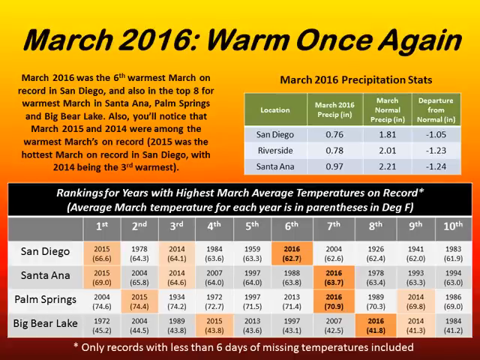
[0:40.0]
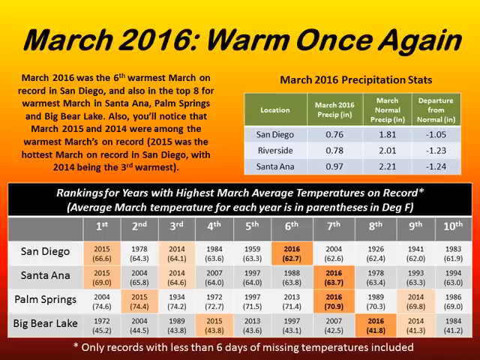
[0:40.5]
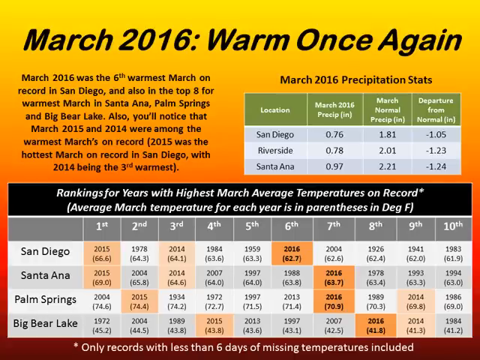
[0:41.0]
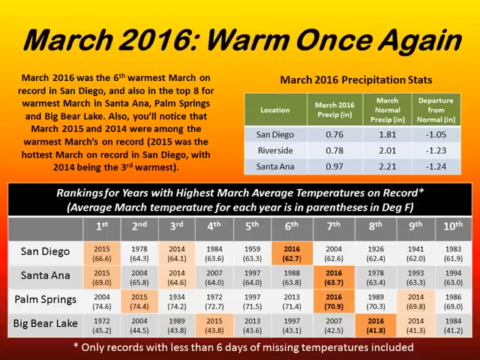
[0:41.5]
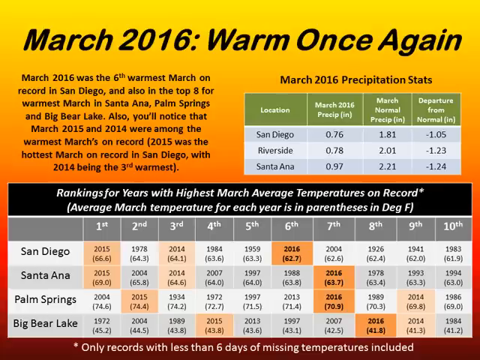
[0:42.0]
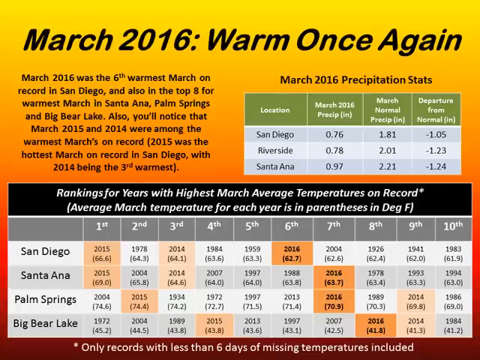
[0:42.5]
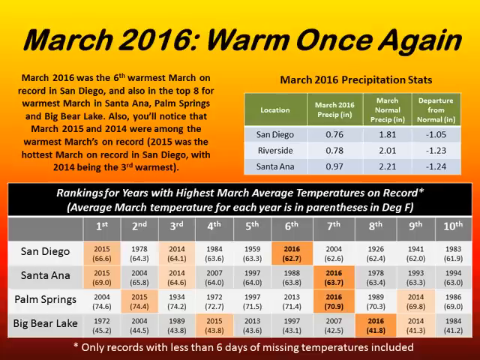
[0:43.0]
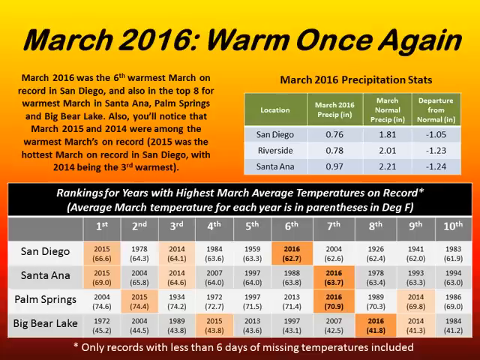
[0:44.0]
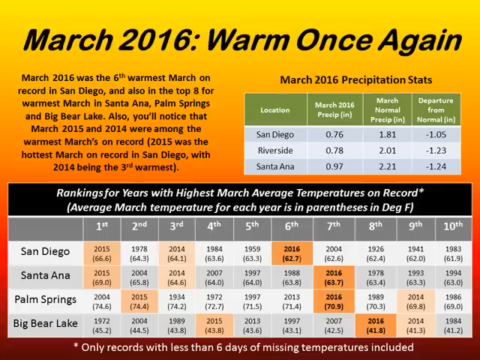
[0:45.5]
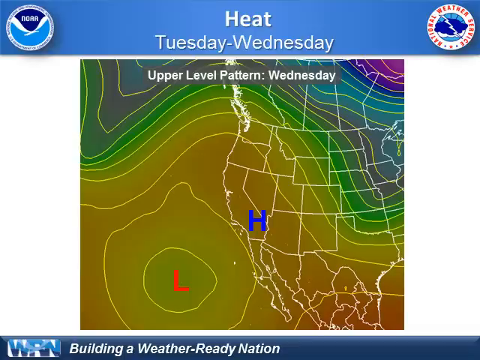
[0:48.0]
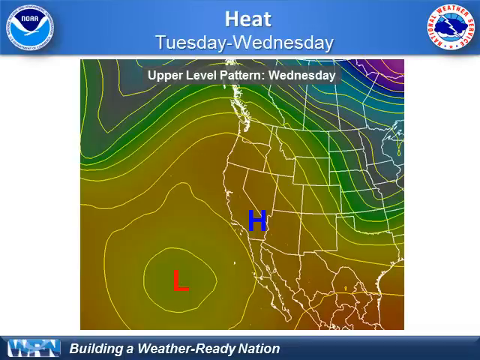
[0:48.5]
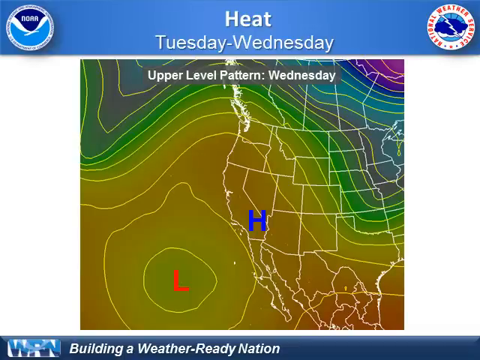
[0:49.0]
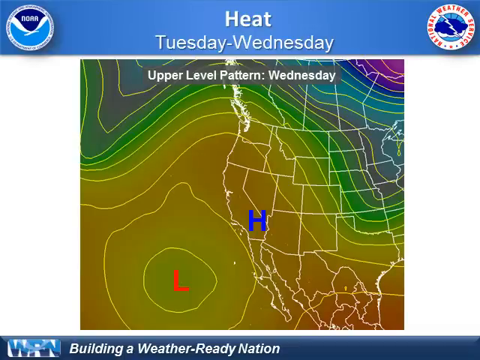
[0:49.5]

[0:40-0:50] A yellow, orange, and red chart says "March 2016, warm once again". A paragraph on the left says "March 2016 was the 6th warmest March on record in San Diego, and also in the top 8 for warmest March in Santa Ana, Palm Springs, and Big Bear Lake." It also notes that March 2015 and 2014 were among the warmest Marches on record, with 2015 the hottest March on record in San Diego and 2014 the 3rd warmest. A chart in the middle gives March 2016 precipitation stats for San Diego, Riverside, and Santa Ana, showing a negative difference between normal precipitation and March 2016 precipitation. At the bottom, four cities are analyzed: San Diego, Santa Ana, Palm Springs, and Big Bear Lake. The next chart looks like a weather map with a low and a high over the western half of the United States. The top says "heat Tuesday through Wednesday", and below that it says "upper level pattern Wednesday". A low is out to sea off the Mexican coast, below Baja California, and a high is hitting southern California. Waves grow in different colors, from light green to darker blue to purple.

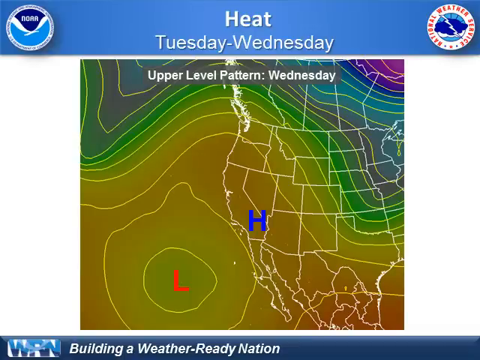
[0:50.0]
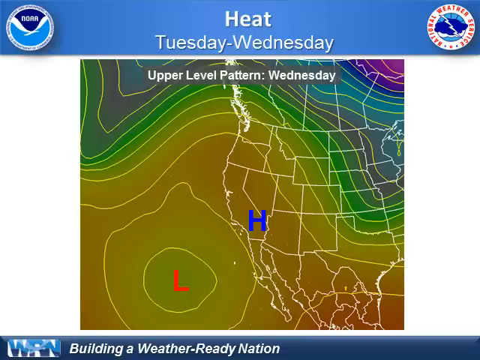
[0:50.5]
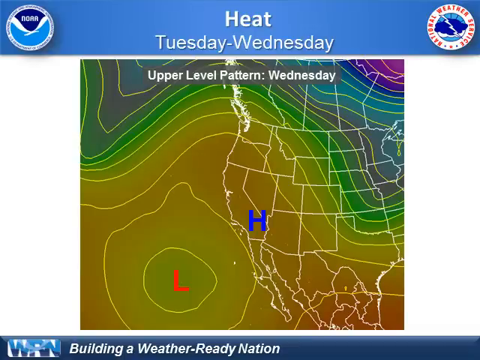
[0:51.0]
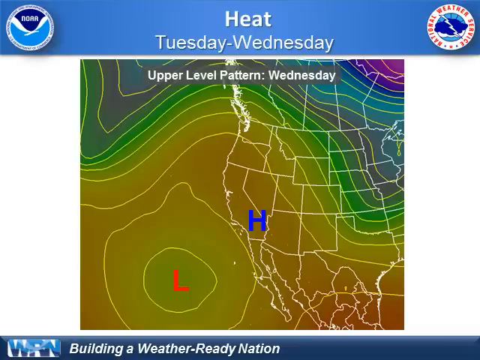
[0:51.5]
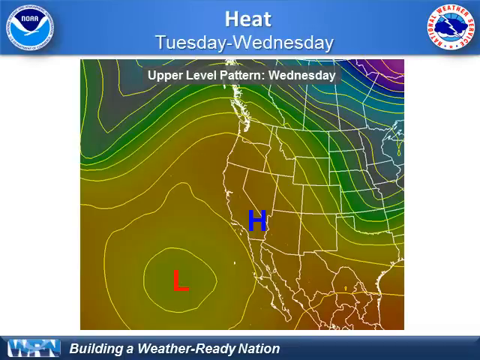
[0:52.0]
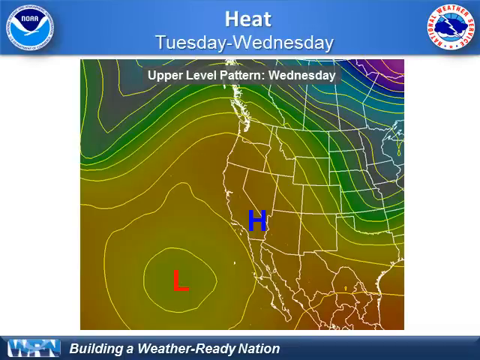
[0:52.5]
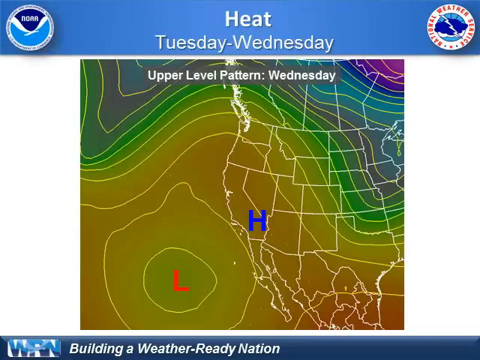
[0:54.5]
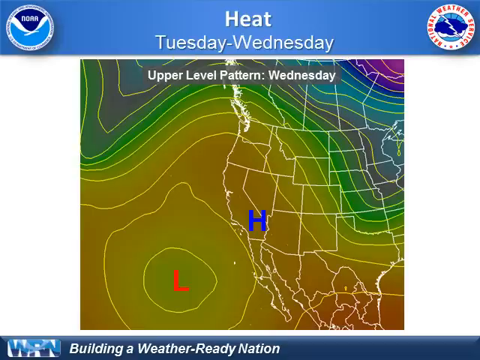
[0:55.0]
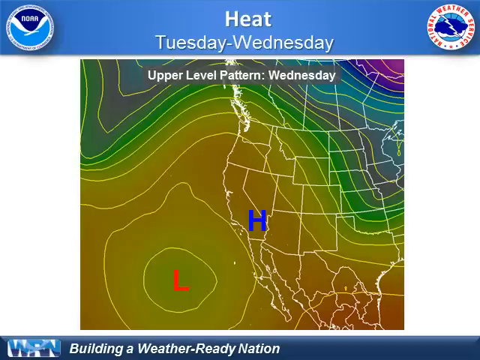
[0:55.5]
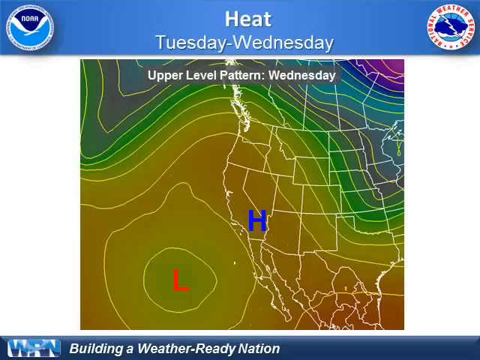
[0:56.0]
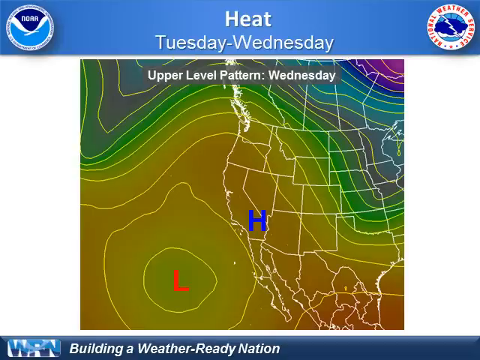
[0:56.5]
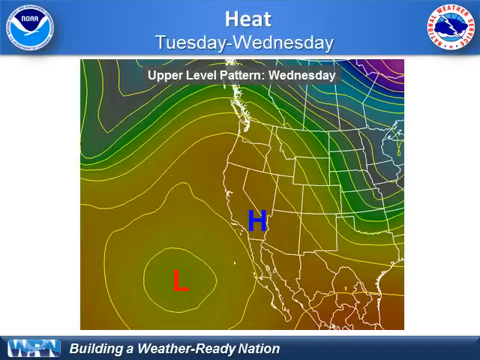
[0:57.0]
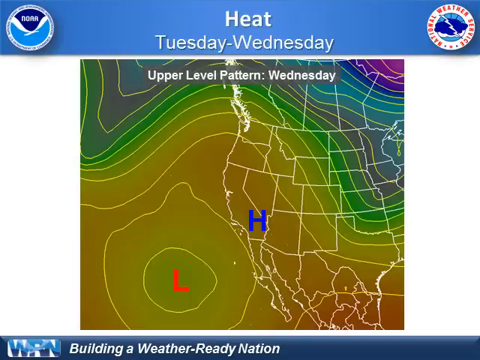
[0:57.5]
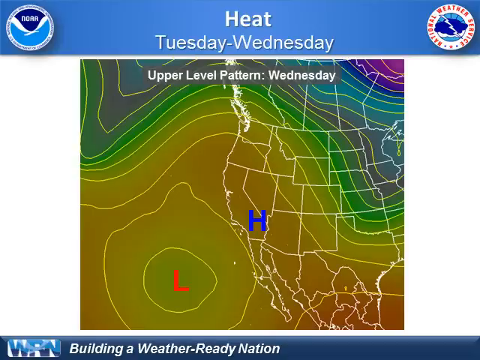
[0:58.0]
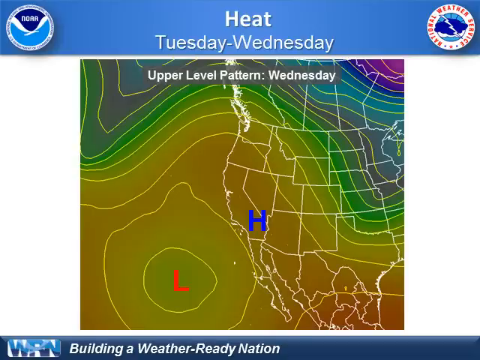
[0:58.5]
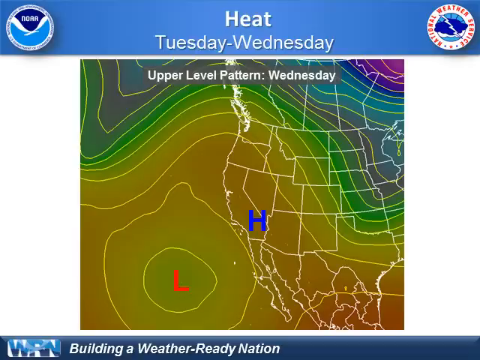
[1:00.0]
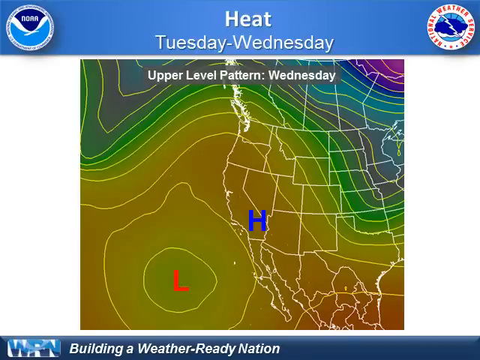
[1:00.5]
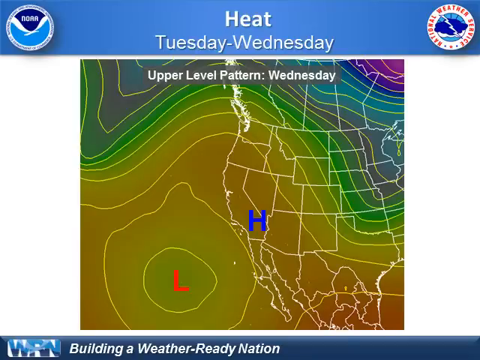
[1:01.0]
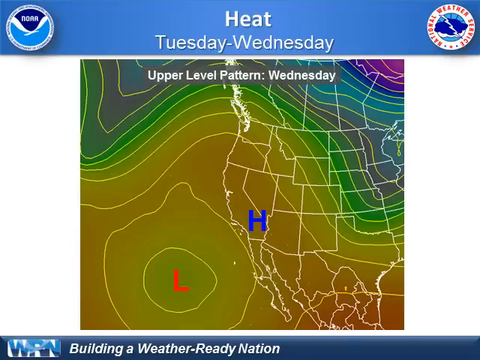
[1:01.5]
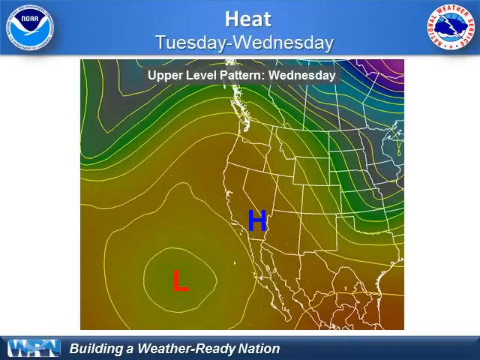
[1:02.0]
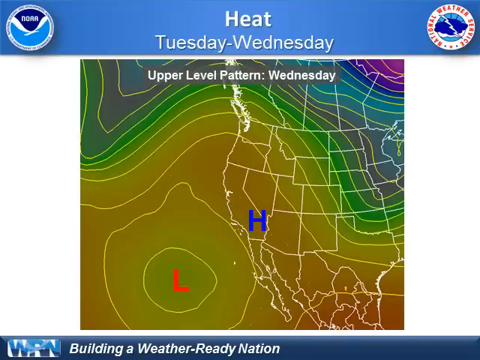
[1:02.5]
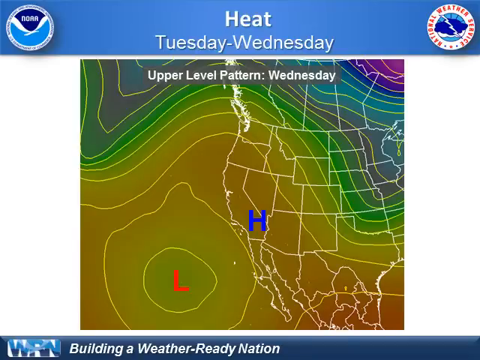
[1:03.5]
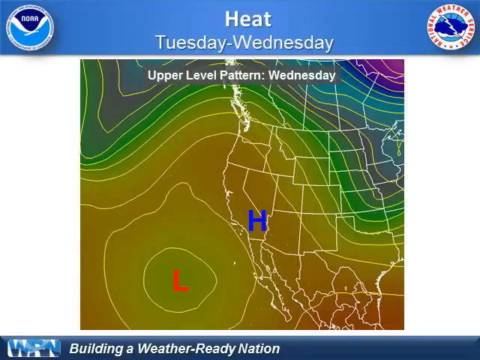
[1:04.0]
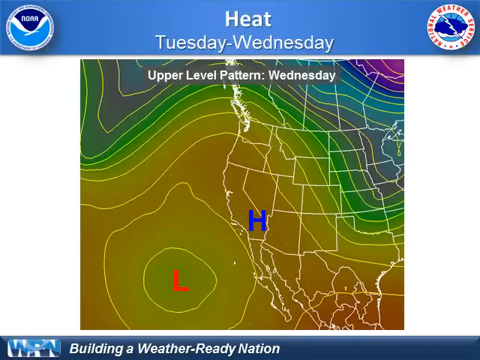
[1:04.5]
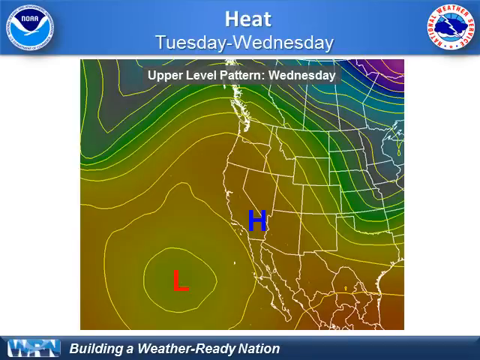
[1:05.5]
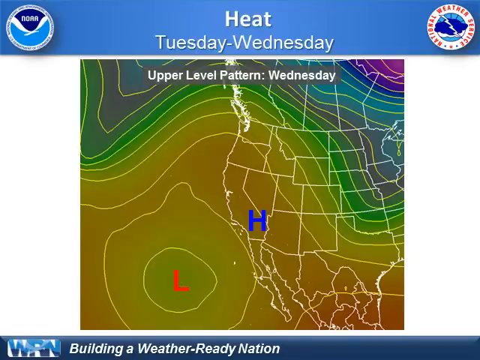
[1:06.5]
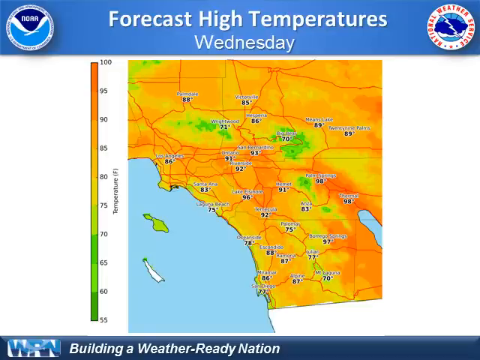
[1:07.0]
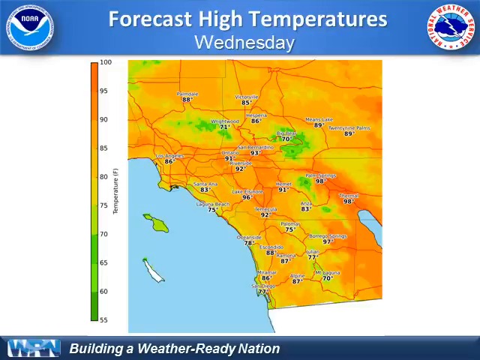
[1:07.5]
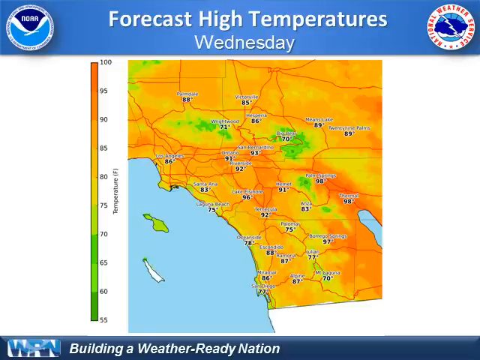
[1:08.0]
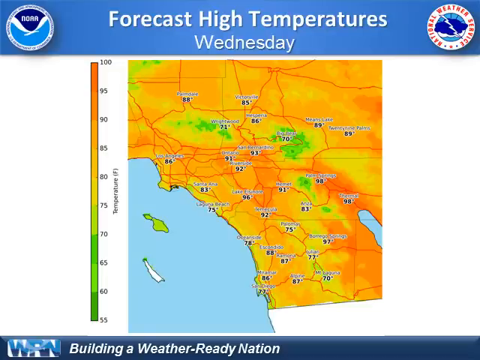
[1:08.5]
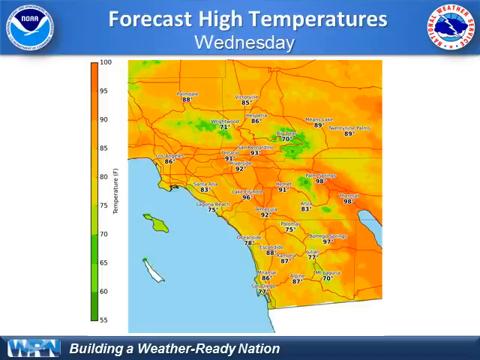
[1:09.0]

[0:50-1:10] A weather map has "NOAA" in the upper left-hand corner and "National Weather Service" on the right, with a logo of a black cloud and lightning and a white cloud behind it. A banner at the top says "Heat Tuesday to Wednesday". The low and high pressure map shows the western half of the United States and parts of Canada and Mexico. Off the coast of Baja is a low marked with an L and a circle around it. The map changes a little, then gets bigger and bigger, showing a high marked with the letter H in California, and the colors expand across the United States in various ways. The map then changes to an orange and yellow colored map titled "forecast high temperatures Wednesday". Temperatures include 86, 78, 92, and 75; Santa Ana has 83, Los Angeles 86, Wrightwood 71, Fillmore 88, Victorville 85, Twenty-nine Palms 89, and Yucaipa 98.